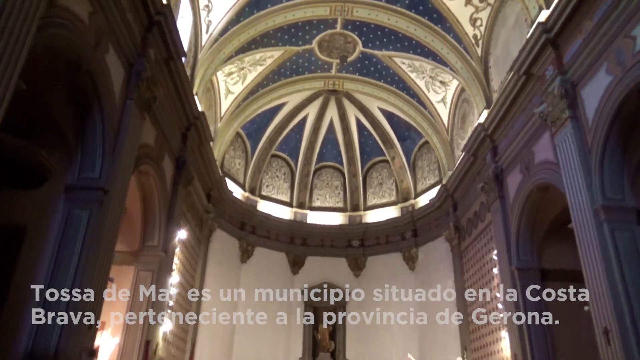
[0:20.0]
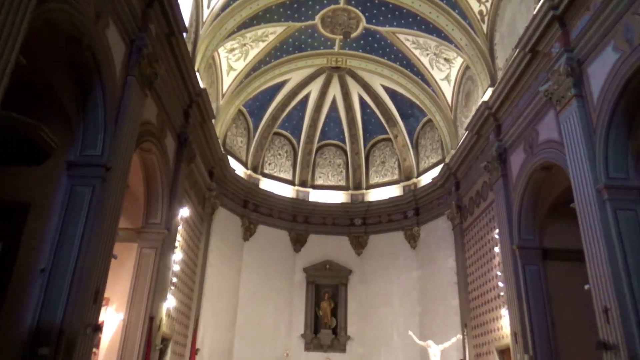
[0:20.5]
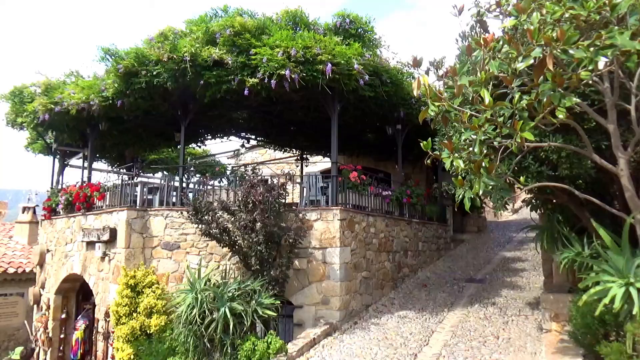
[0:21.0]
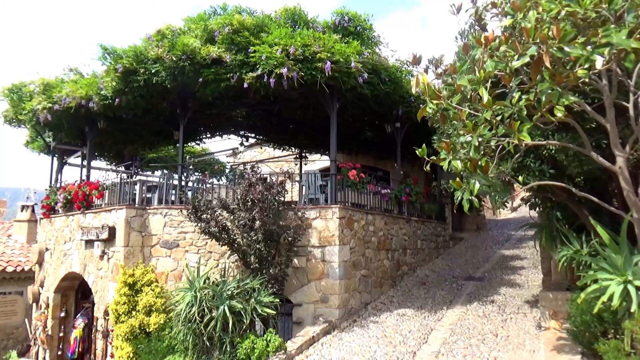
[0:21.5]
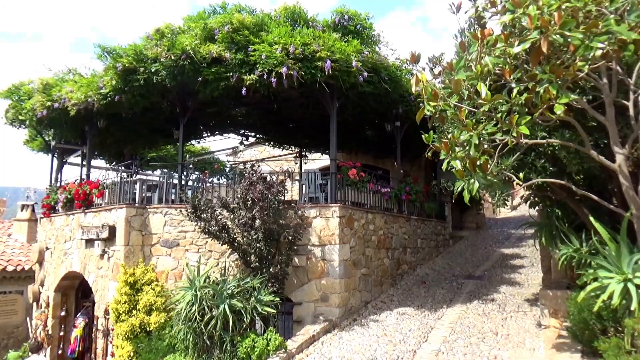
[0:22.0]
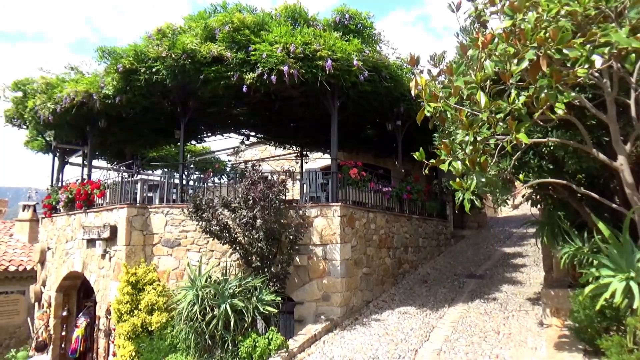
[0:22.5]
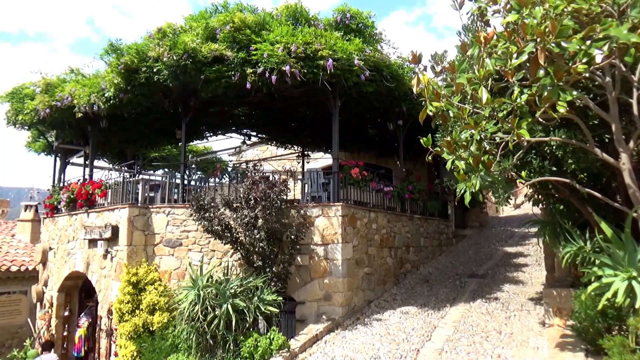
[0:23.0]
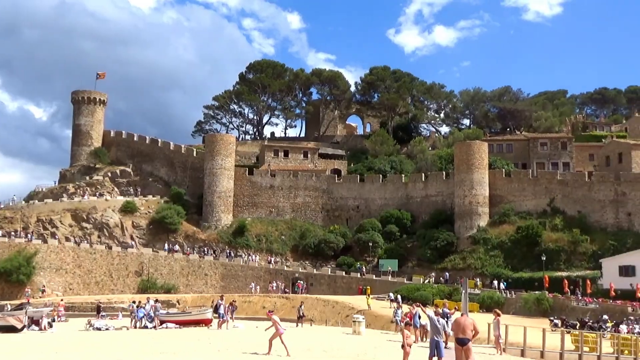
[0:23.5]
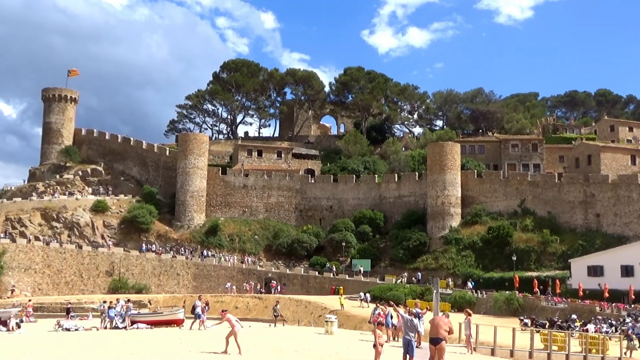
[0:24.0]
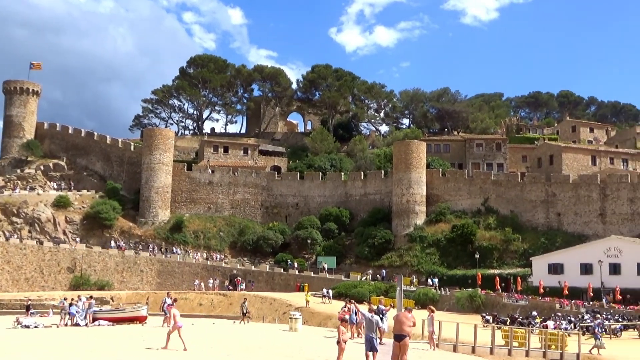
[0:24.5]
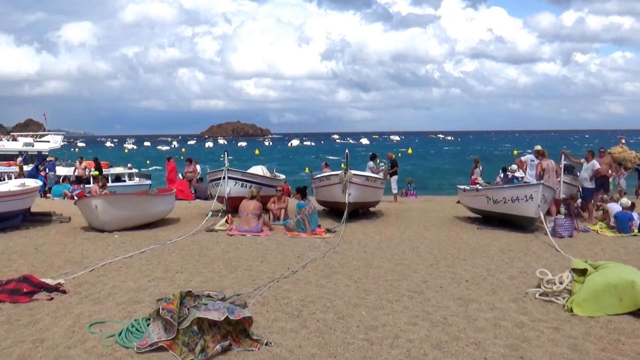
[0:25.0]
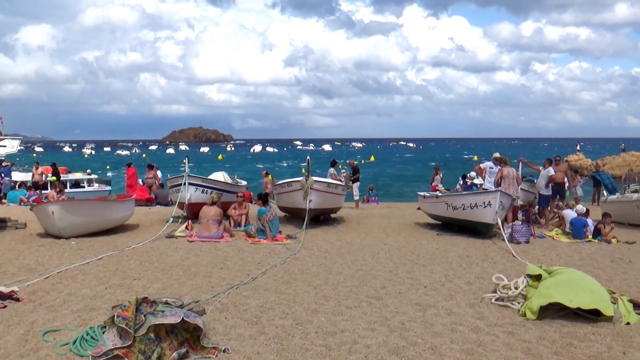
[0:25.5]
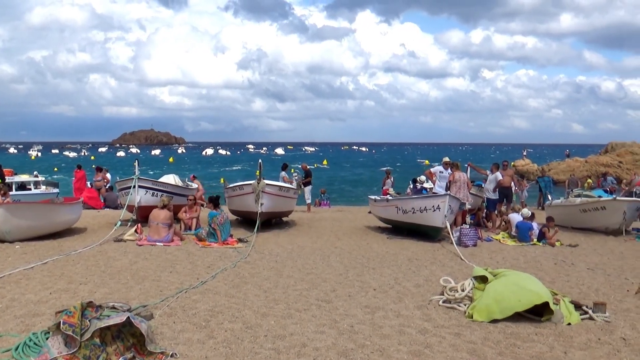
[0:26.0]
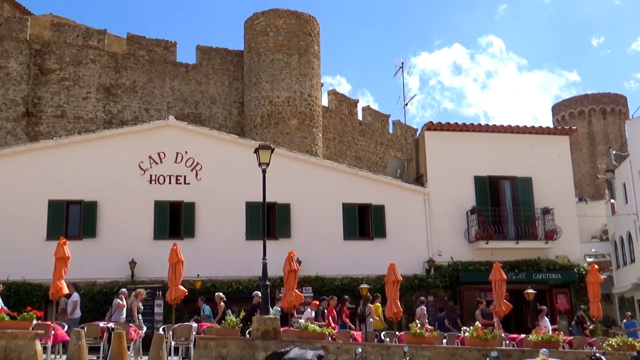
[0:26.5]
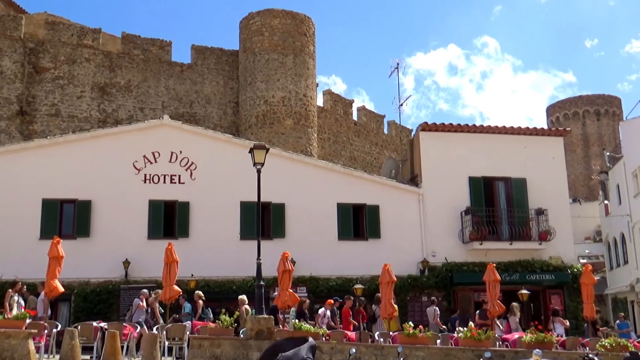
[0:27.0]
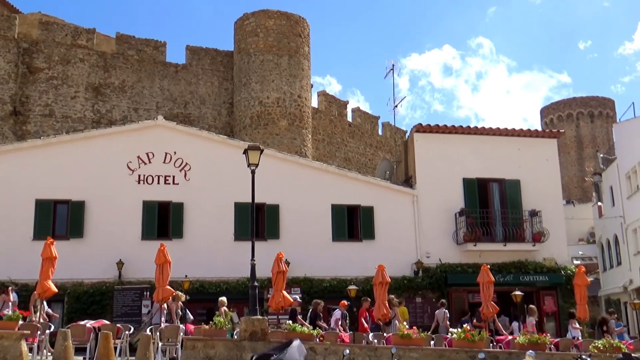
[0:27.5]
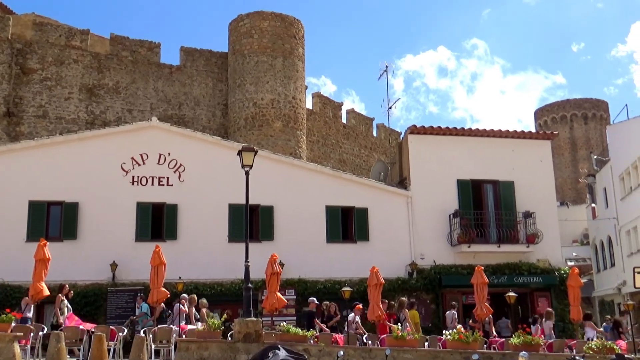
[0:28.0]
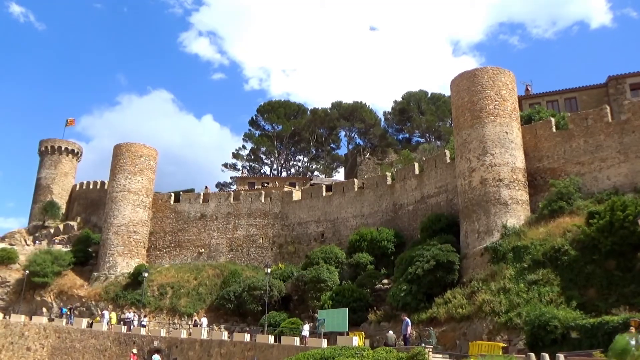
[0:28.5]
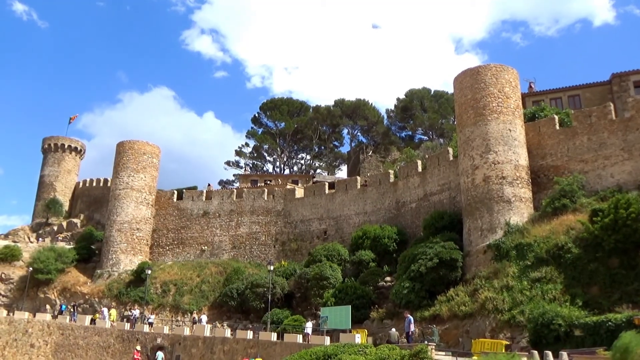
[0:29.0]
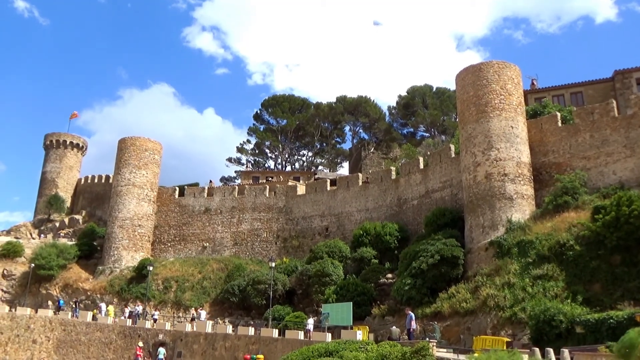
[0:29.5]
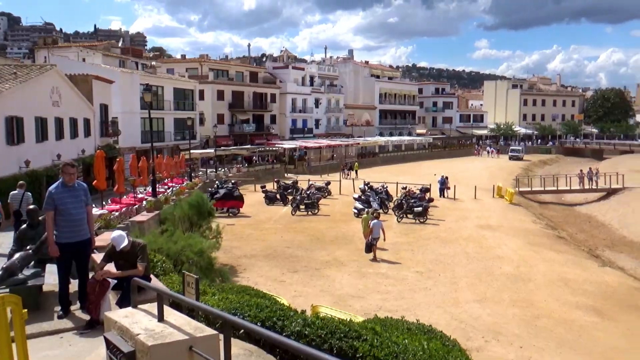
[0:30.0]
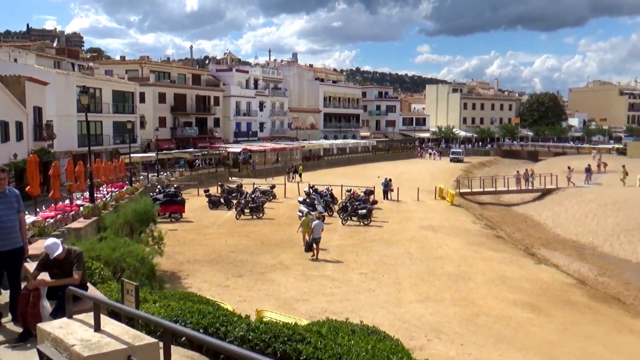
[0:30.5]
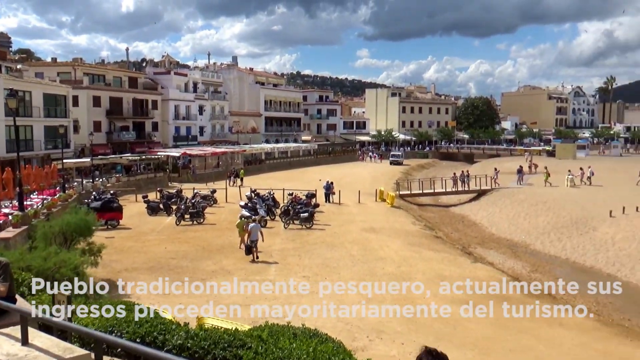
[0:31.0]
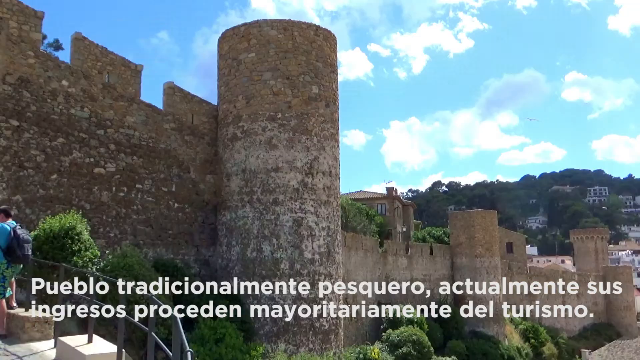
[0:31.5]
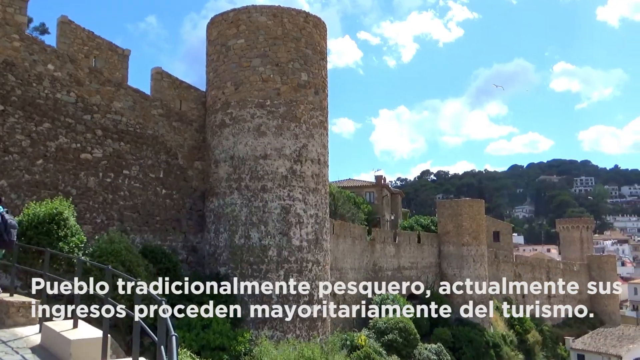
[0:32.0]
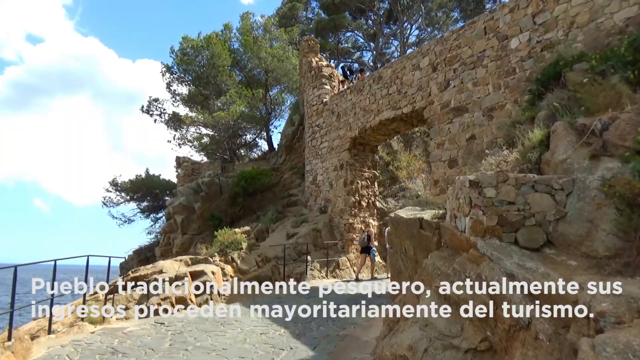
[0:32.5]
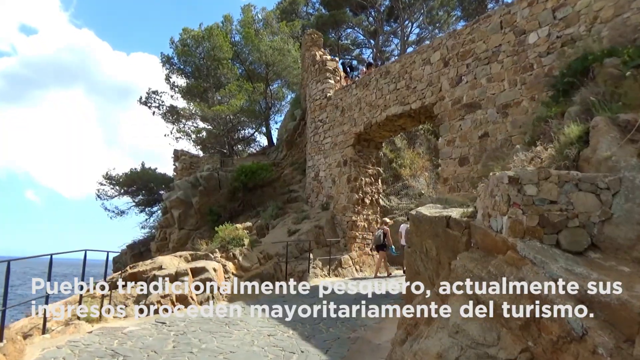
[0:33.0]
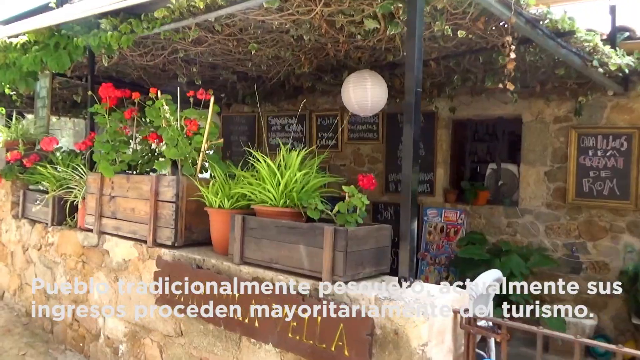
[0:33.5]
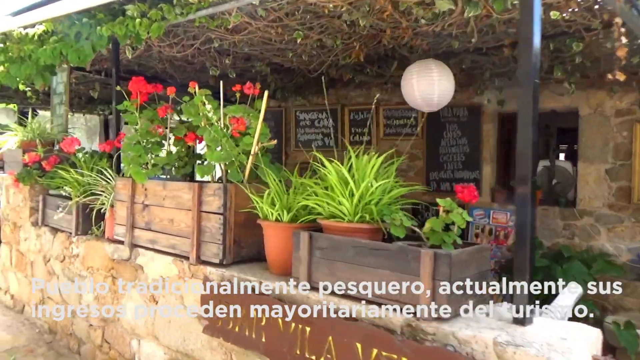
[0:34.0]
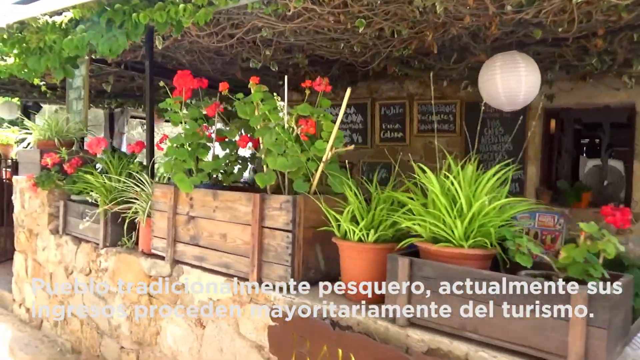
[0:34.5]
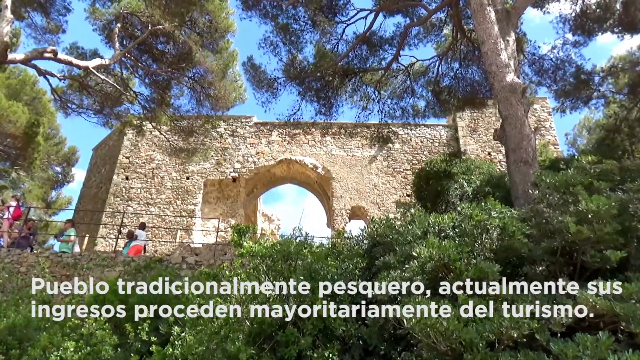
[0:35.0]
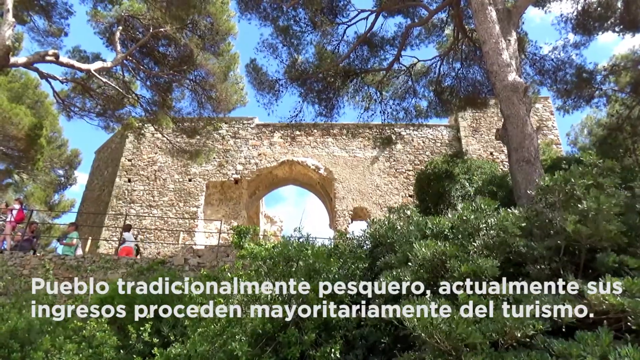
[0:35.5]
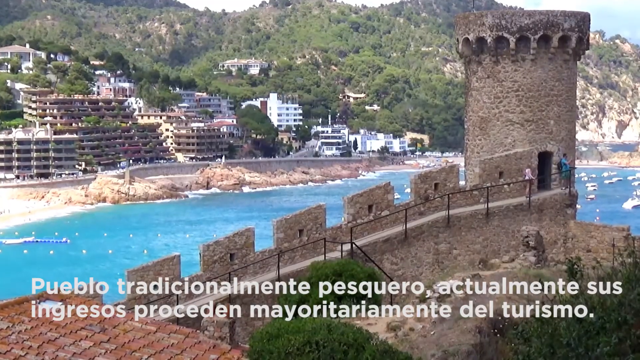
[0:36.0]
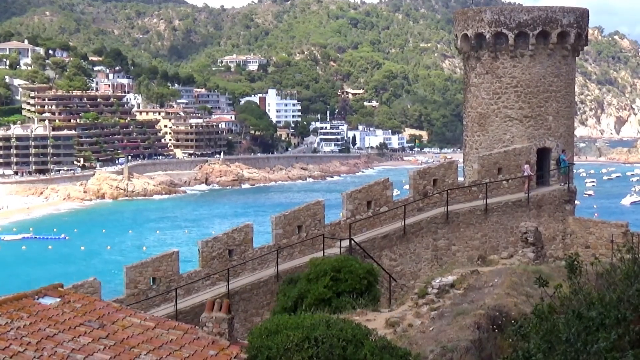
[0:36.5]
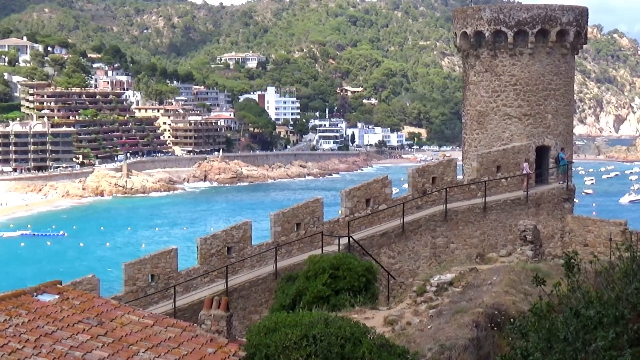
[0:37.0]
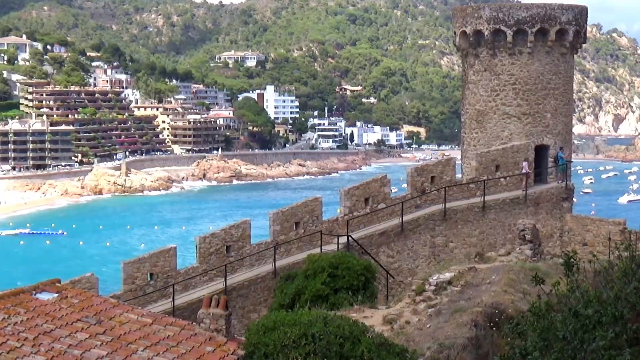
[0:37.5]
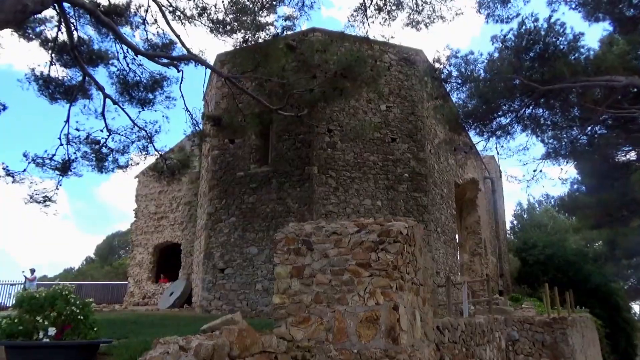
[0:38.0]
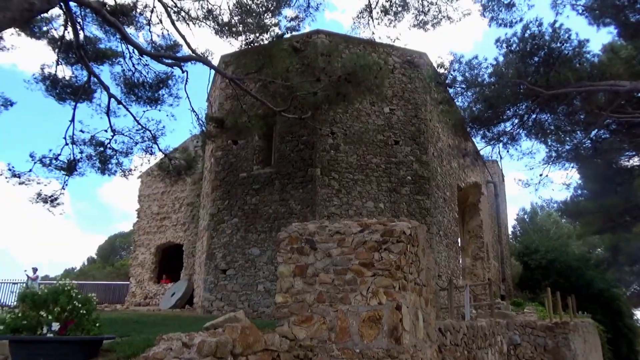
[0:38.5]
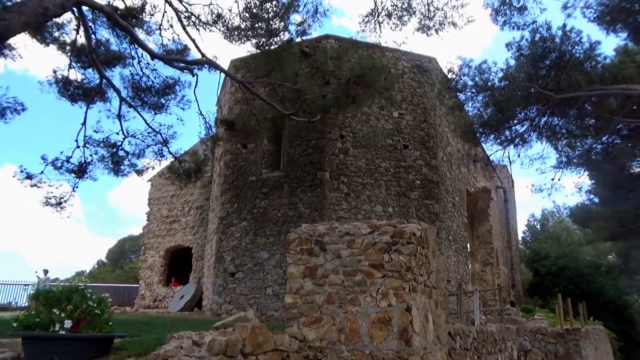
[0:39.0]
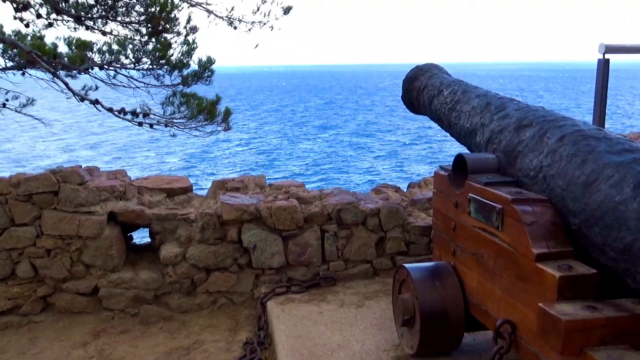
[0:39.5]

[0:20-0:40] The shot opens in what appears to be a cathedral in Casa de Mar, showing vaulted ceilings and a flying buttress; the ceiling is blue with what appear to be stars set into it. The camera slowly moves down to show a photo, apparently of Jesus. Next comes an outdoor dining area with a grassy umbrella covering the food area, then a turret with castle walls that look medieval. Another shot shows tourists and boats on a beach, the boats looking ready to go out to sea. The Capdor Hotel is then shown with umbrellas, followed by another view of the area on a beautiful day. The architecture looks traditionally maintained, probably dating from around the 1400s, and the area shows lots of natural beauty.